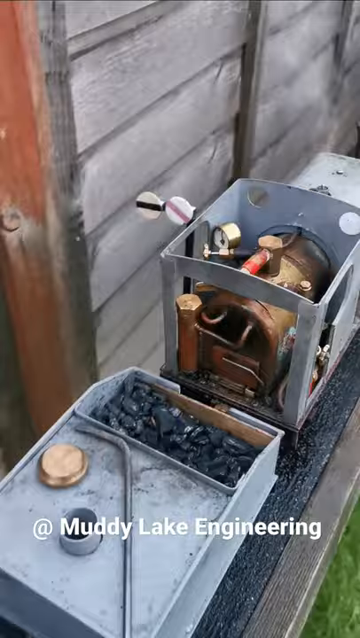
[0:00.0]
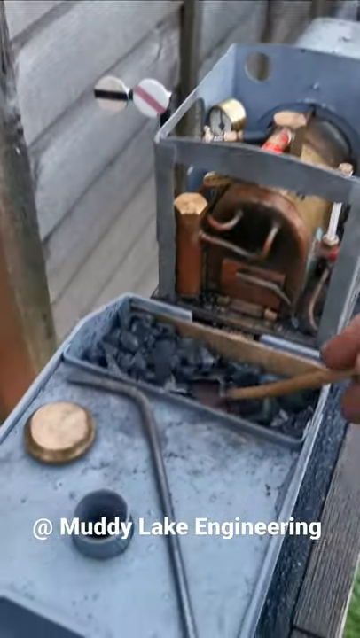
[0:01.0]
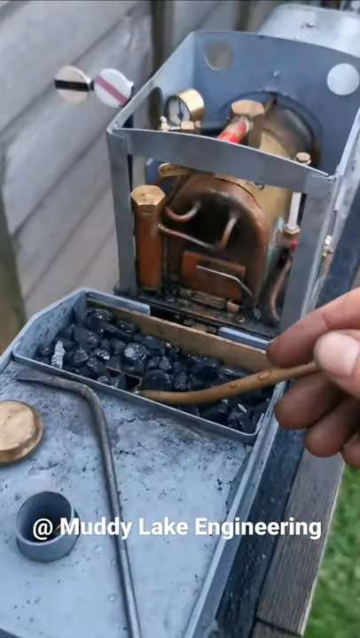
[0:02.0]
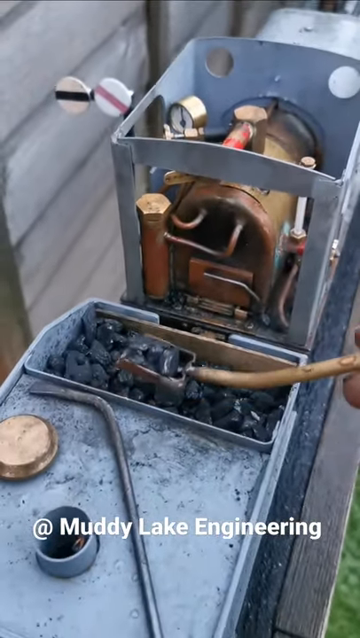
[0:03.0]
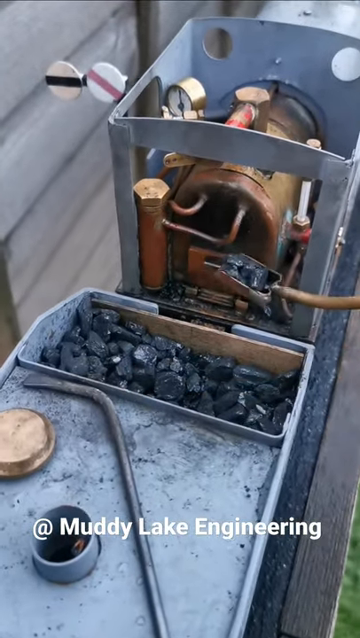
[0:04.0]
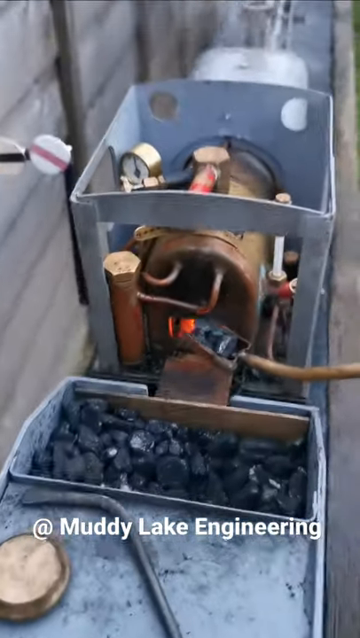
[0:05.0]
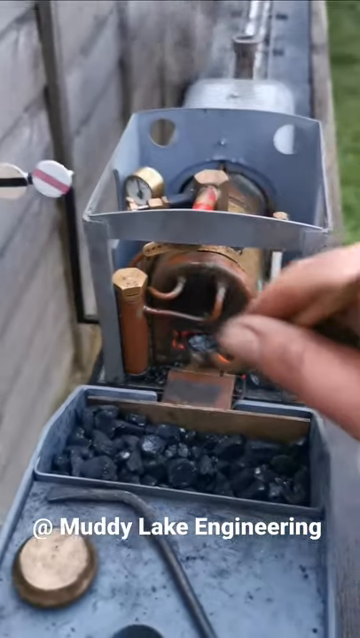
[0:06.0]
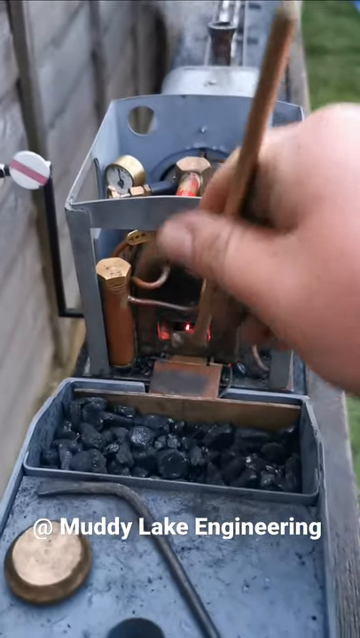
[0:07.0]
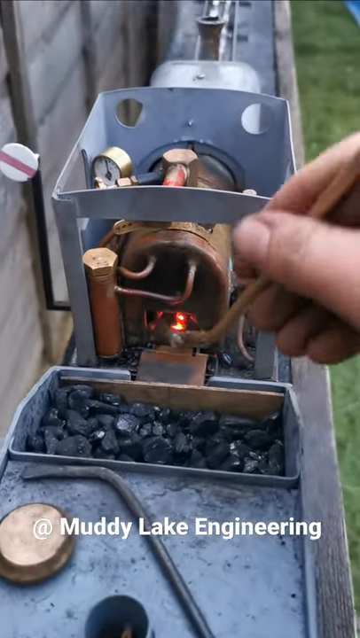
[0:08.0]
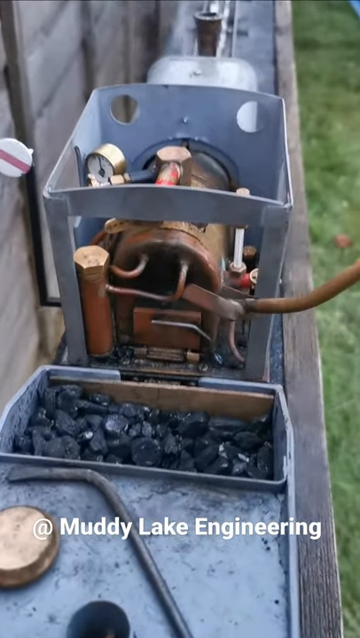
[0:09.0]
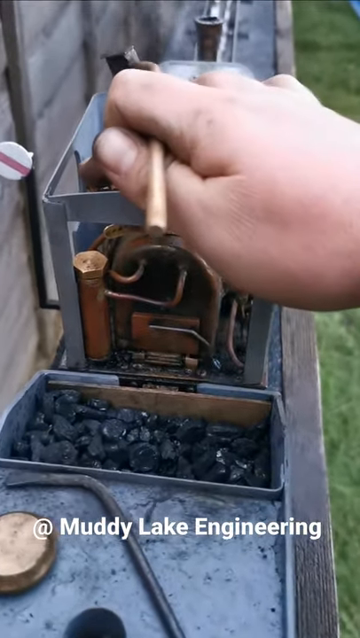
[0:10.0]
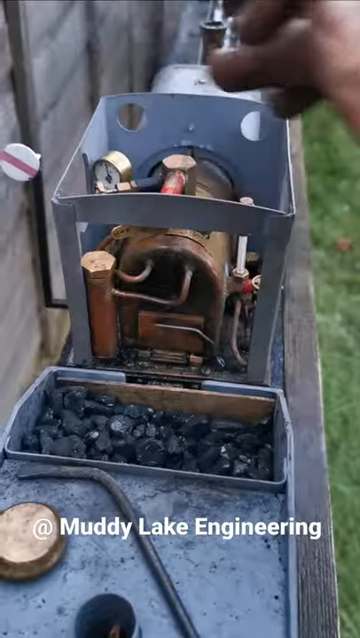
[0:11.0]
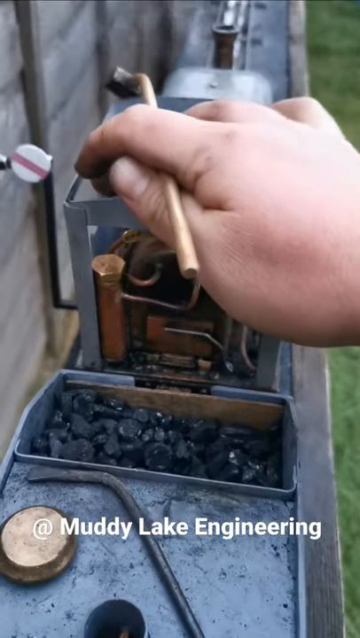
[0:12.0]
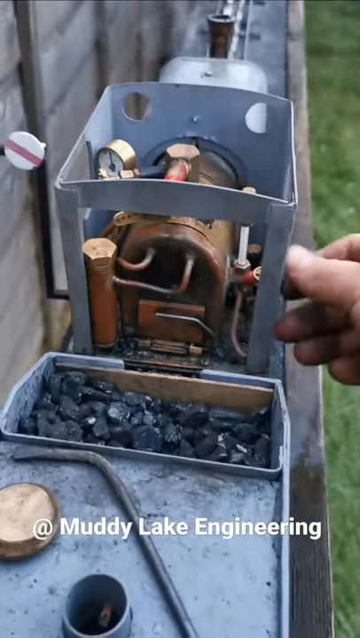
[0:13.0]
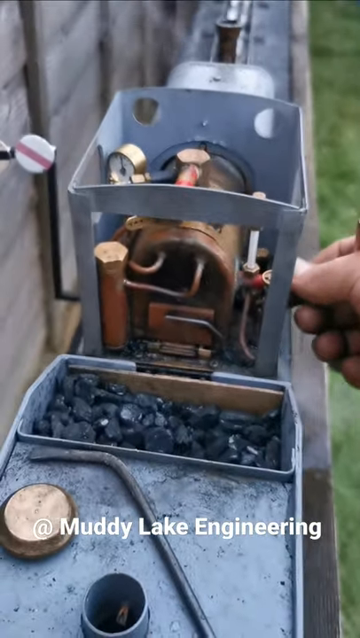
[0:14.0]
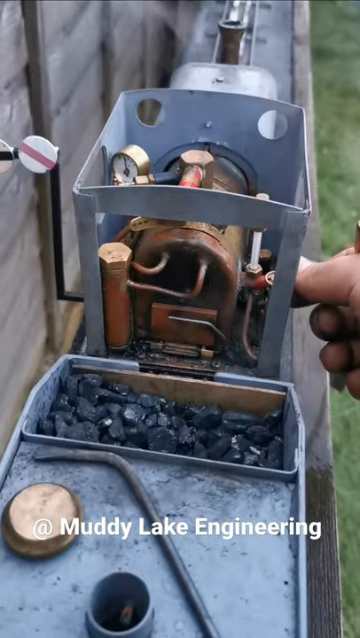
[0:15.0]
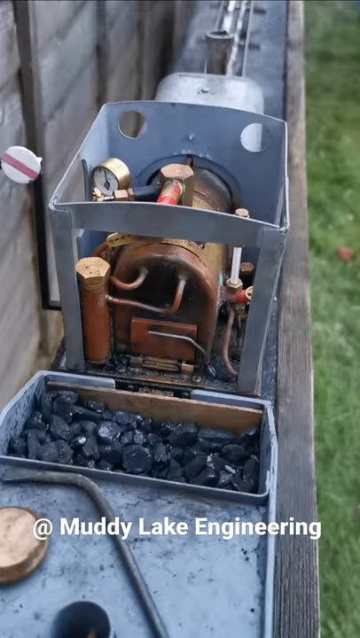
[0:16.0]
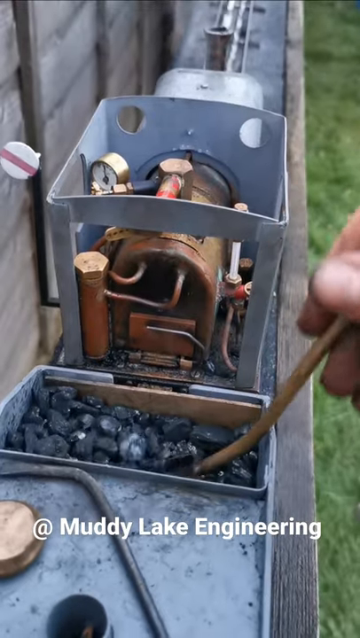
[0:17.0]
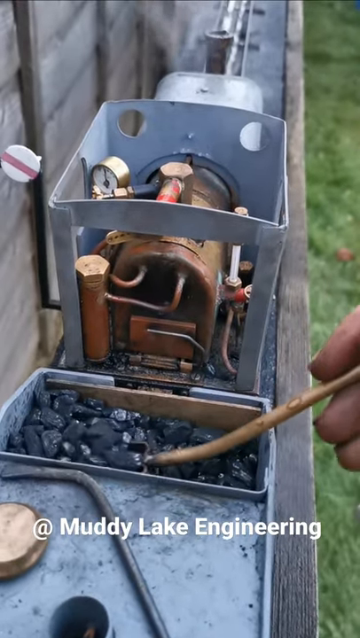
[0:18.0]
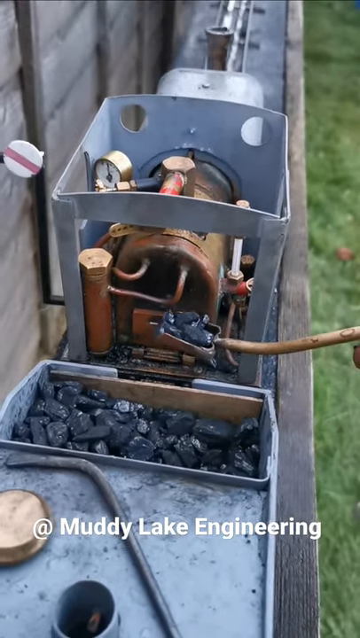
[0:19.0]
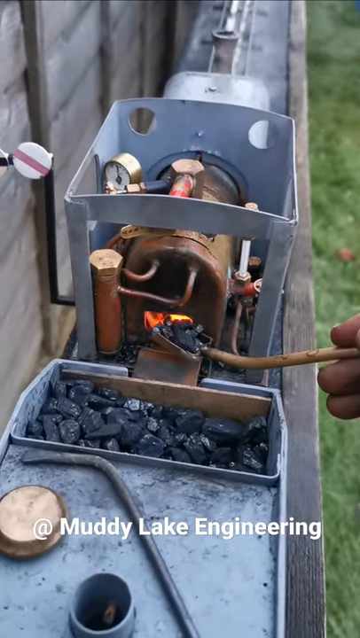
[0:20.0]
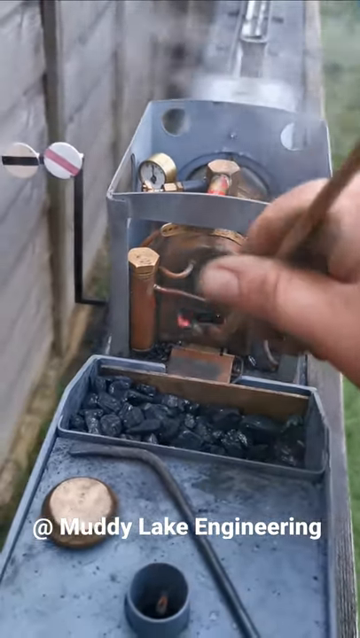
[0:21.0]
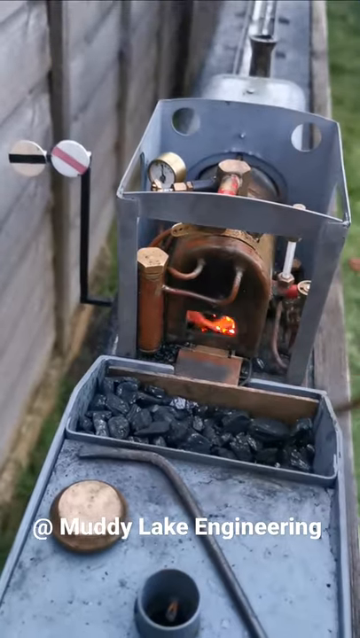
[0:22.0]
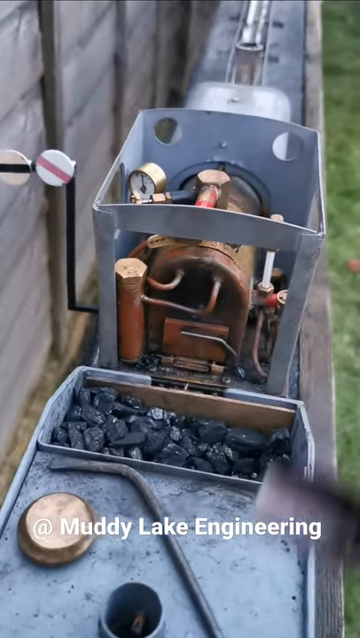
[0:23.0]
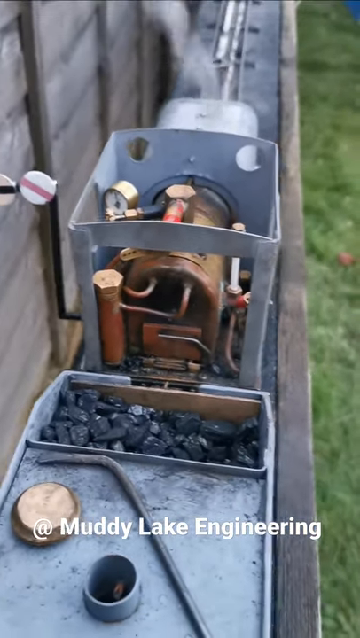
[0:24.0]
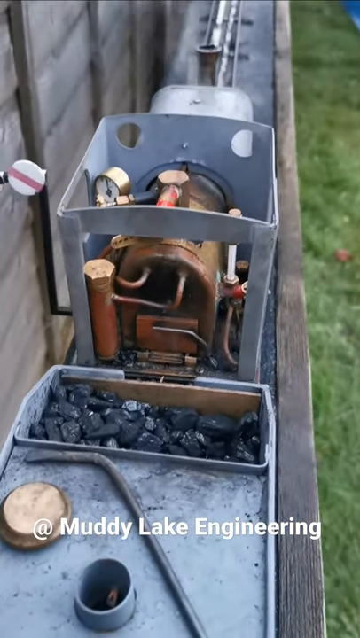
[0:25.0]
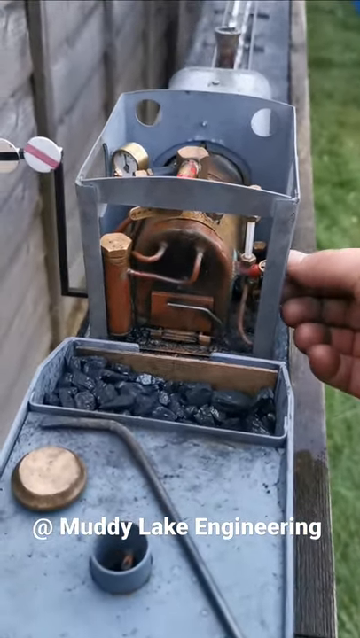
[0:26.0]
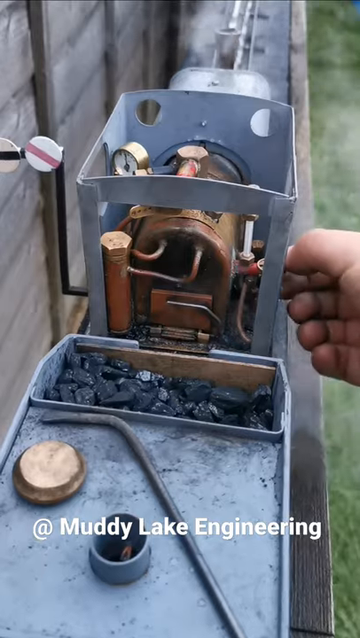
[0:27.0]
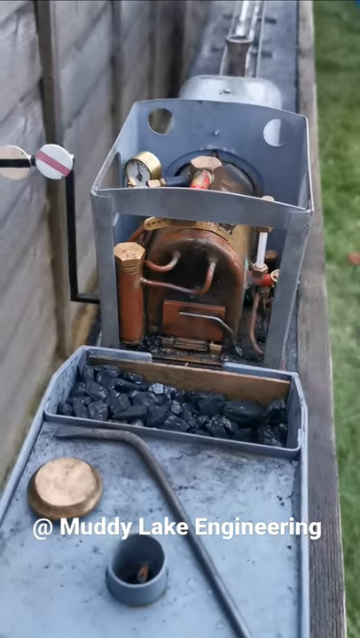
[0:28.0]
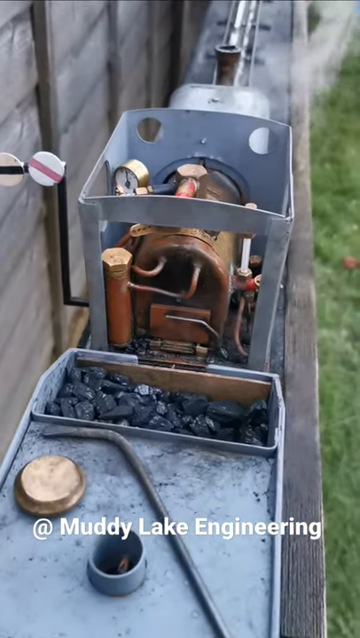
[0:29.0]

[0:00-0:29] Filmed outdoors in portrait orientation, the video shows what looks to be a model train of sorts, painted gunmetal grey and seen from a roughly top-down angle. It appears to be coal powered. A man, who is out of view except for his hands, spoons small shovelfuls of coal into a little engine compartment using a little miniature copper-colored shovel. Behind the engine section there is a small coal car with an exposed area on top where the visible coal can be accessed. He shovels little pieces of coal from the coal car into the open engine compartment, where there is a fire, or at least a light that looks like a fire. He then closes the compartment, taps something on top of the engine, and turns a knob that is out of view. Smoke comes out of the smokestack on the front of the train car, which is not clearly visible.